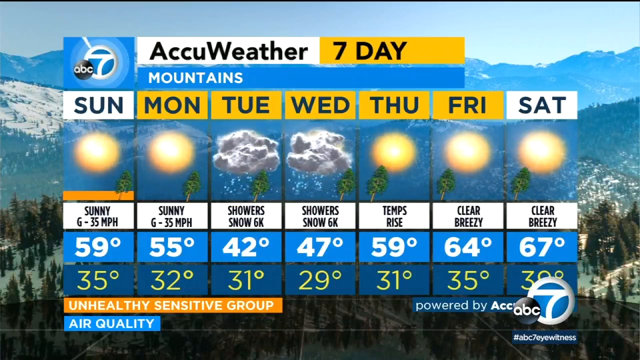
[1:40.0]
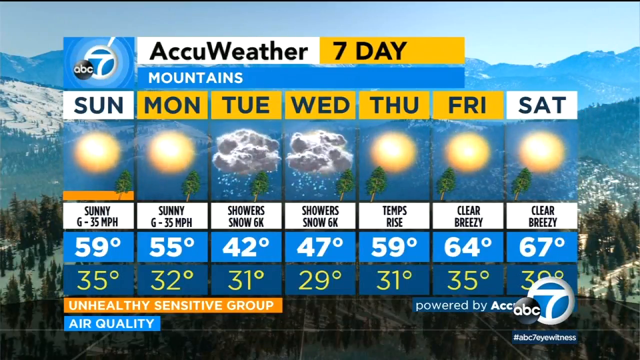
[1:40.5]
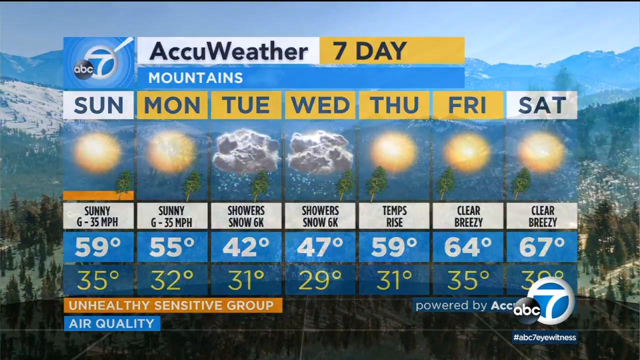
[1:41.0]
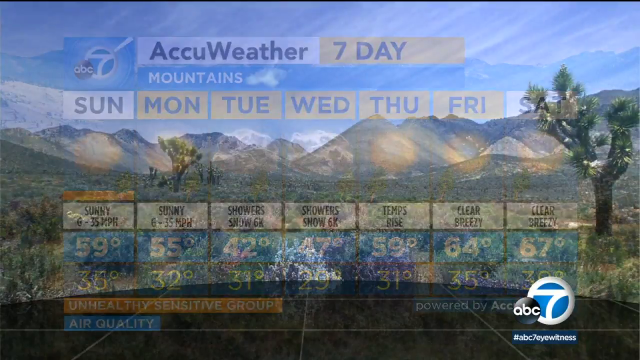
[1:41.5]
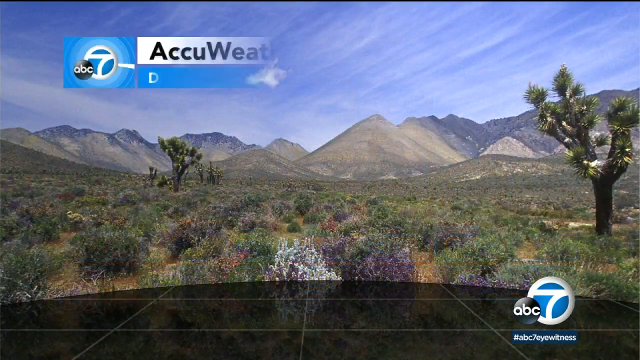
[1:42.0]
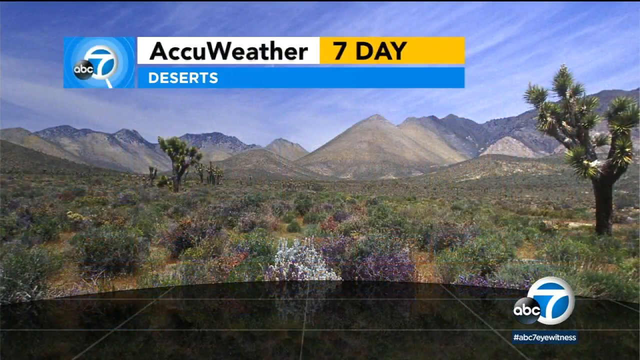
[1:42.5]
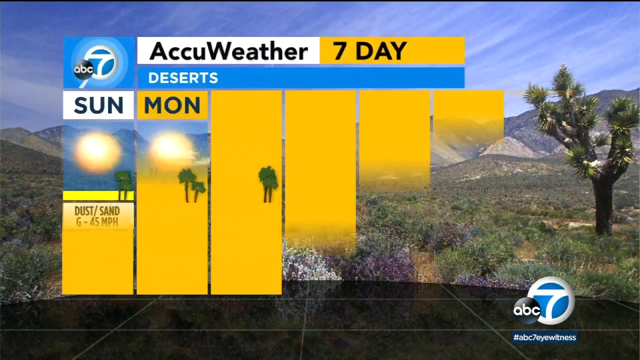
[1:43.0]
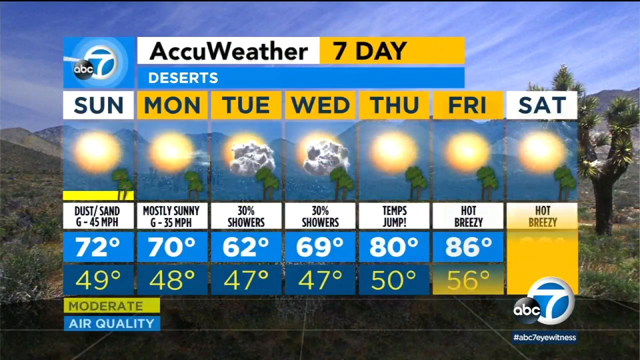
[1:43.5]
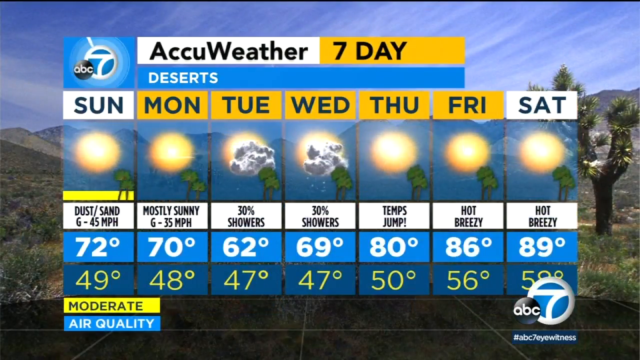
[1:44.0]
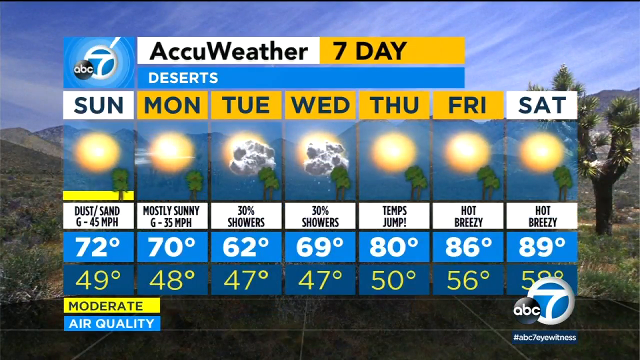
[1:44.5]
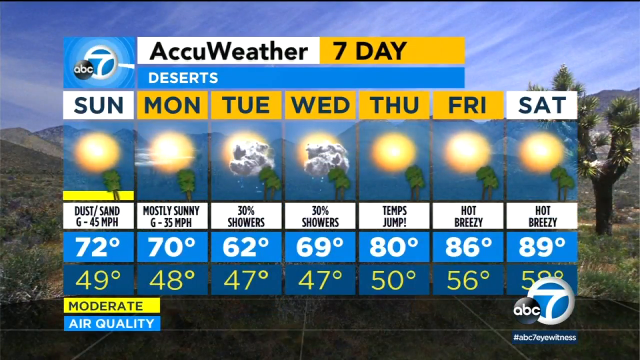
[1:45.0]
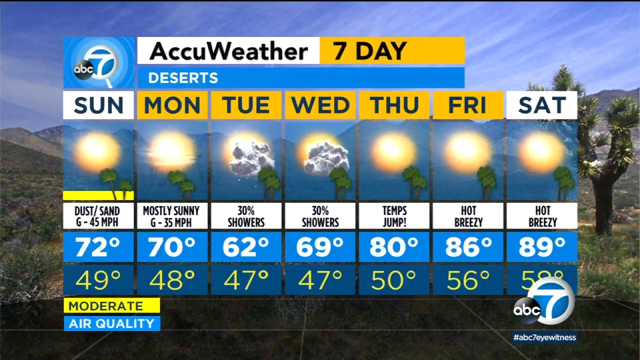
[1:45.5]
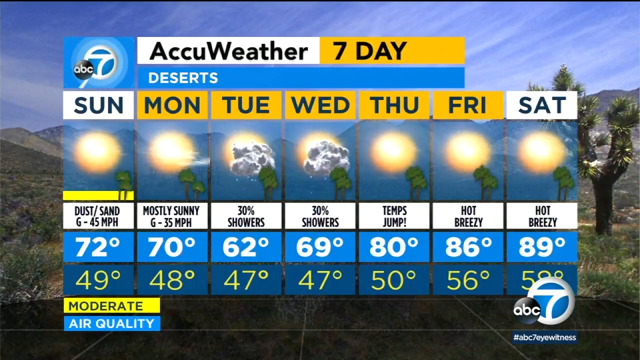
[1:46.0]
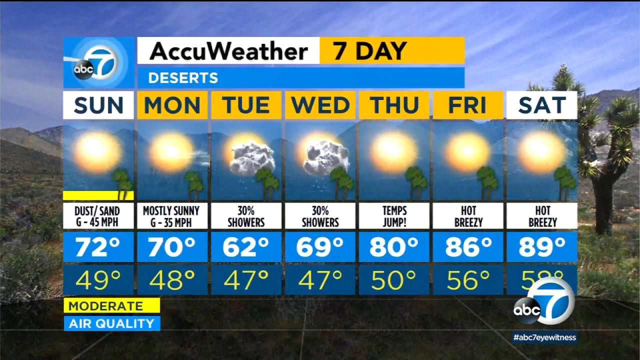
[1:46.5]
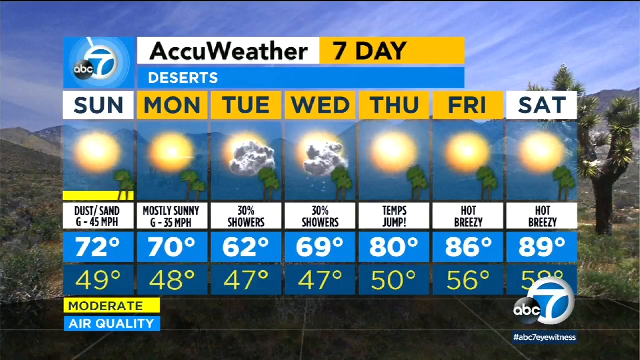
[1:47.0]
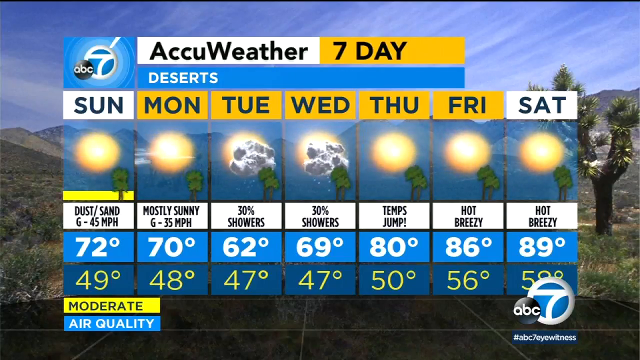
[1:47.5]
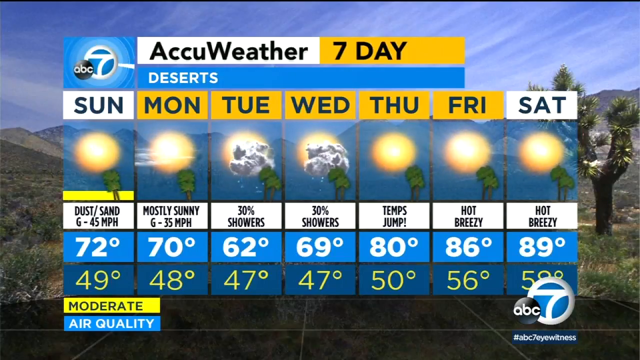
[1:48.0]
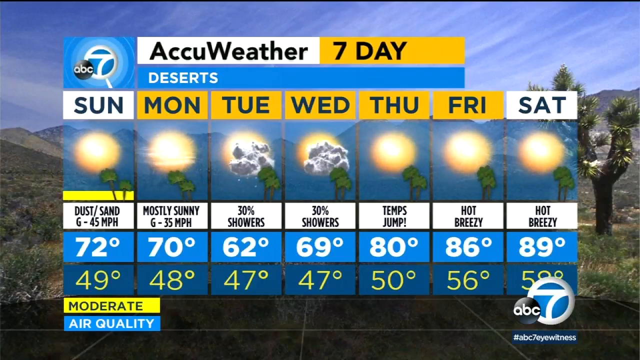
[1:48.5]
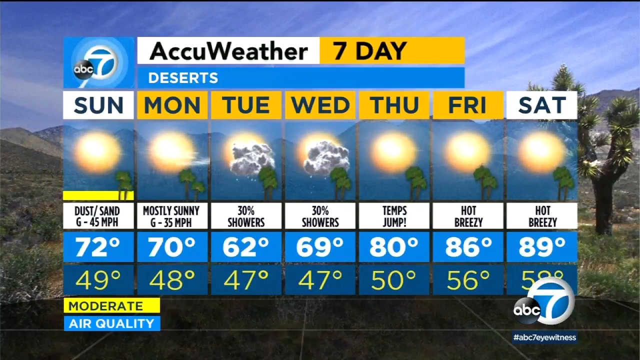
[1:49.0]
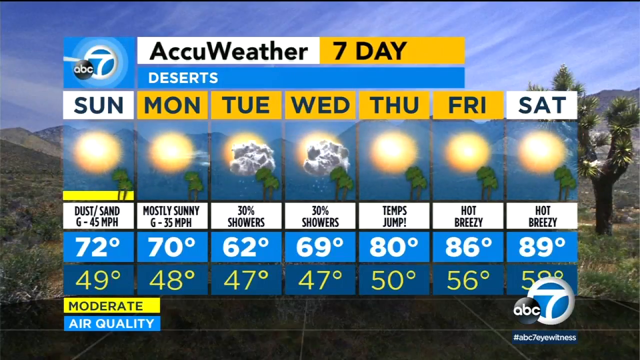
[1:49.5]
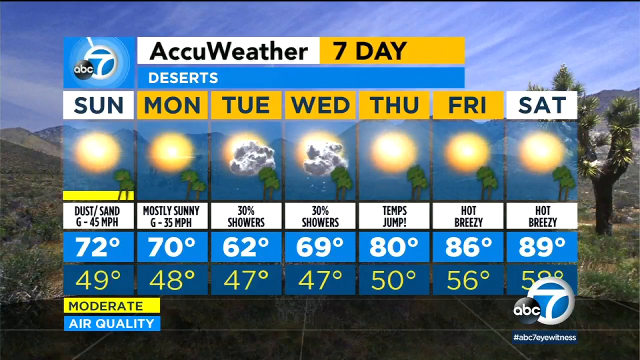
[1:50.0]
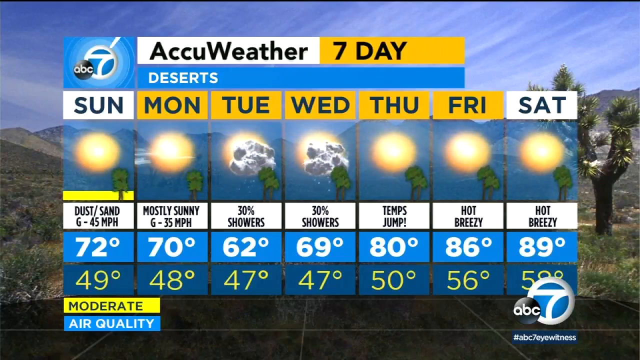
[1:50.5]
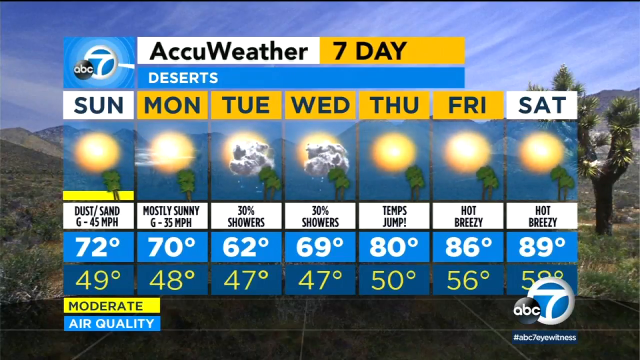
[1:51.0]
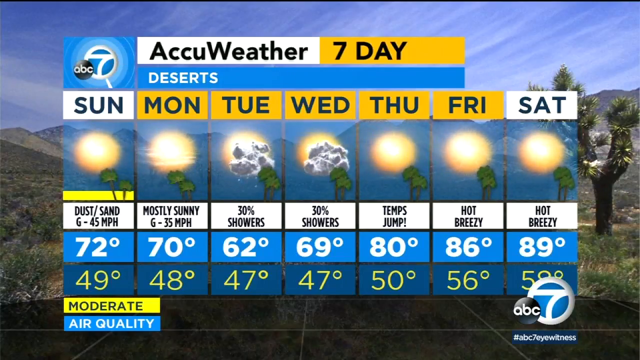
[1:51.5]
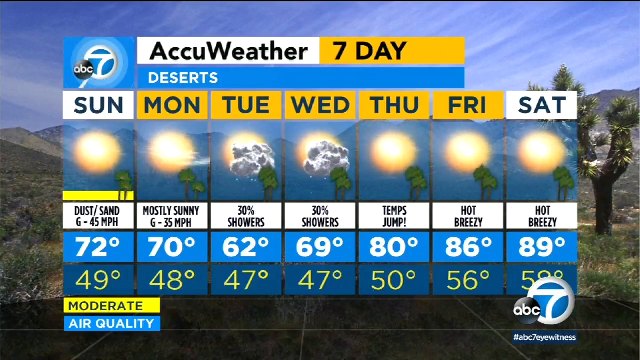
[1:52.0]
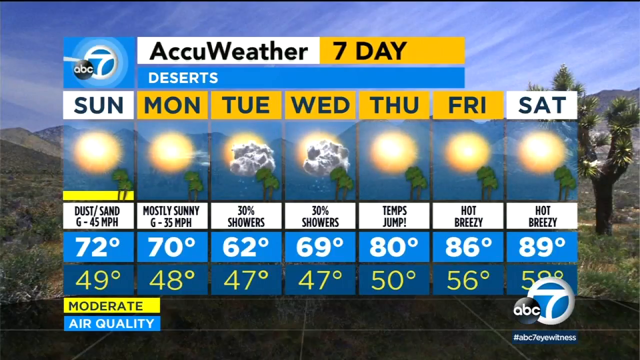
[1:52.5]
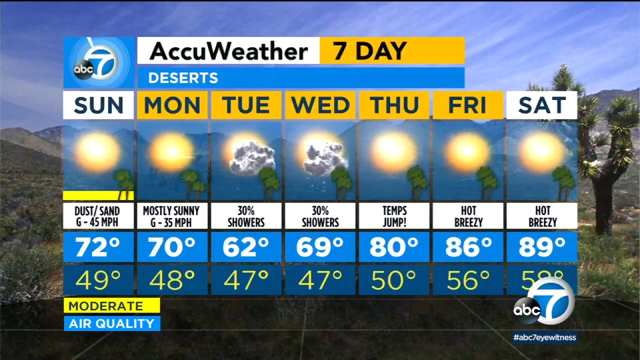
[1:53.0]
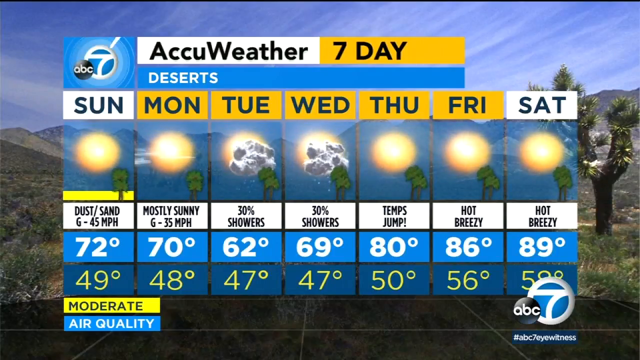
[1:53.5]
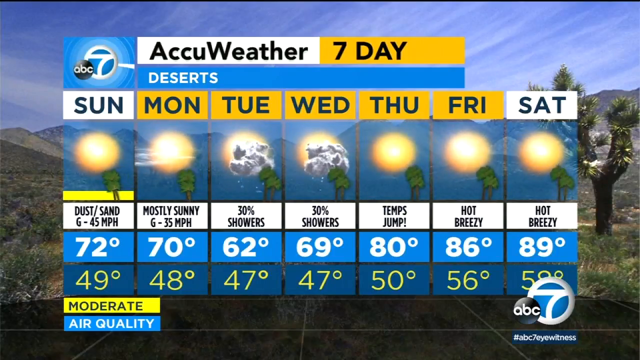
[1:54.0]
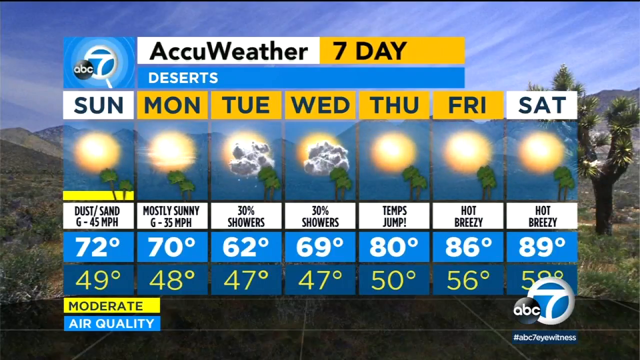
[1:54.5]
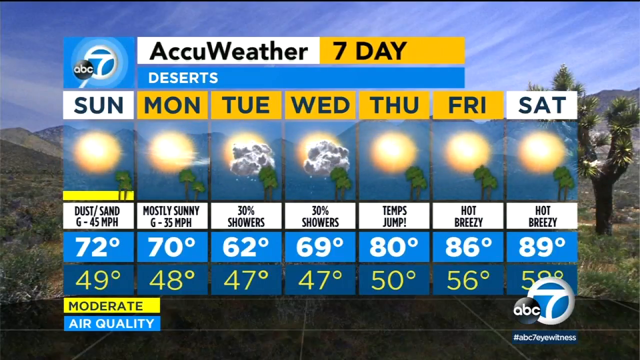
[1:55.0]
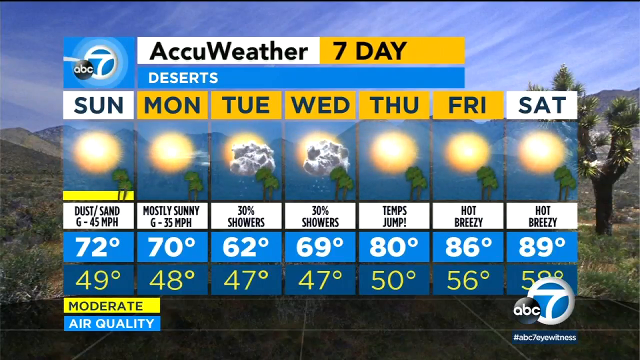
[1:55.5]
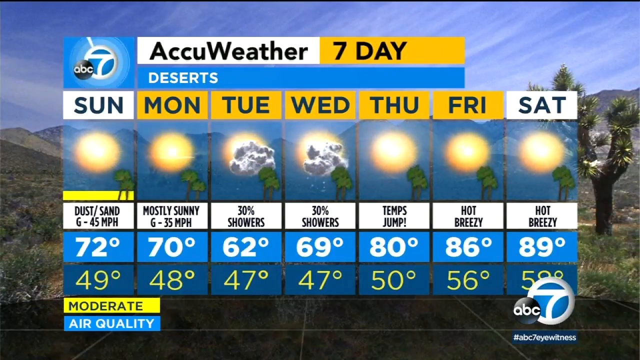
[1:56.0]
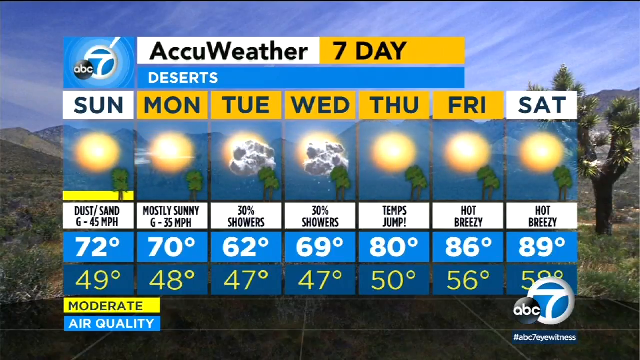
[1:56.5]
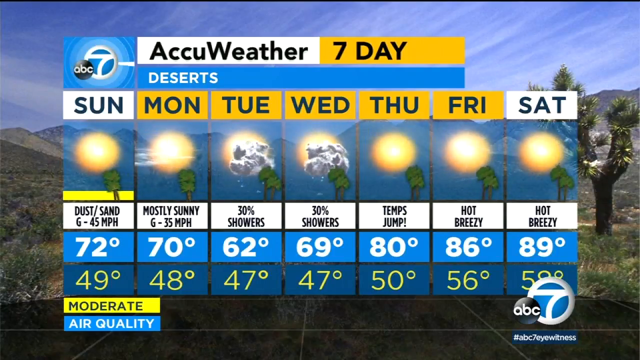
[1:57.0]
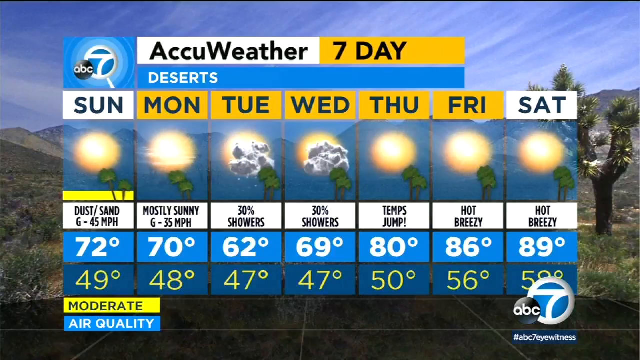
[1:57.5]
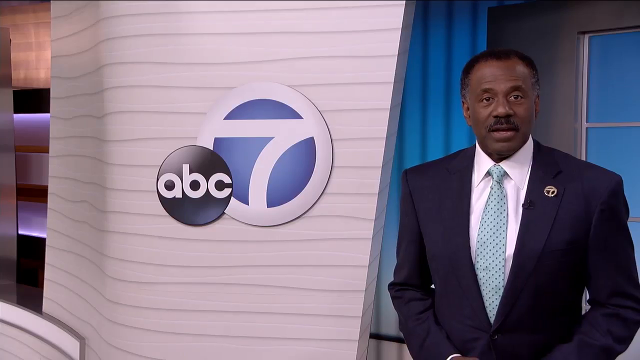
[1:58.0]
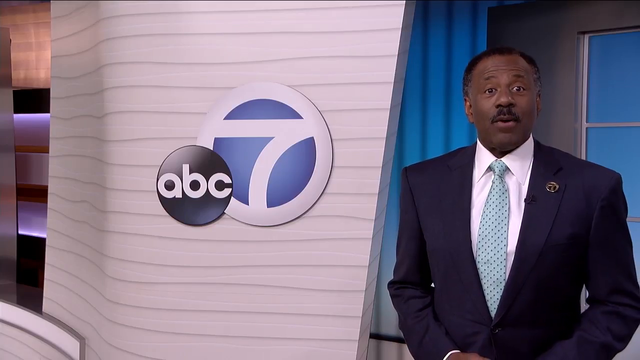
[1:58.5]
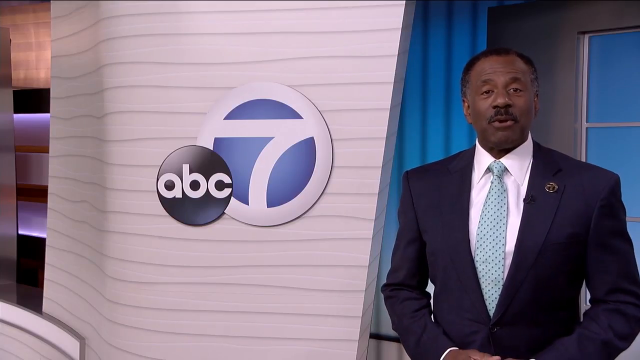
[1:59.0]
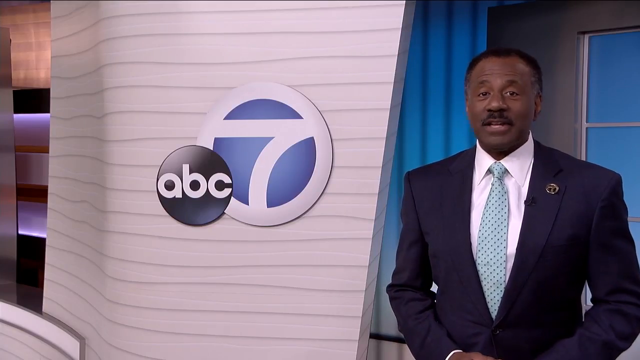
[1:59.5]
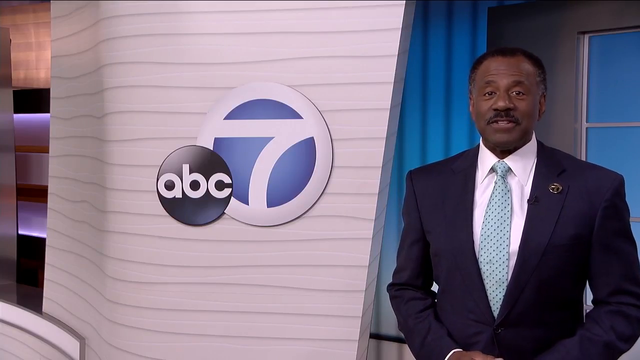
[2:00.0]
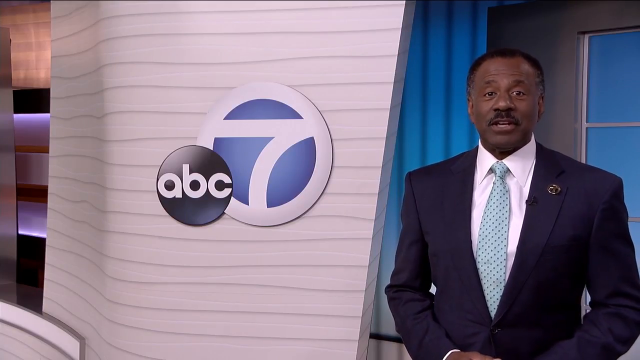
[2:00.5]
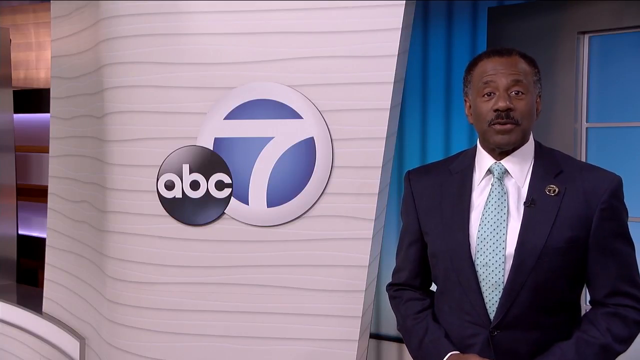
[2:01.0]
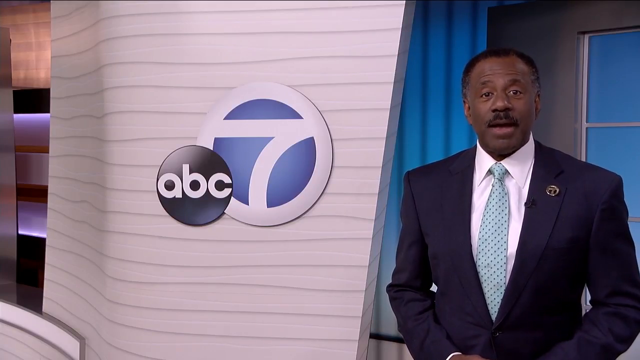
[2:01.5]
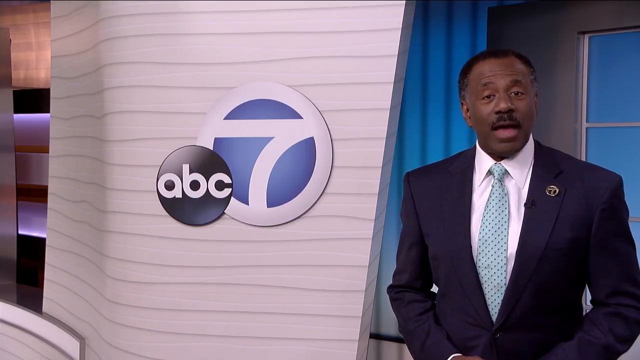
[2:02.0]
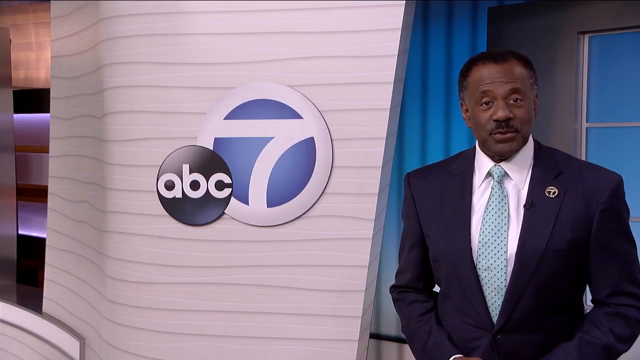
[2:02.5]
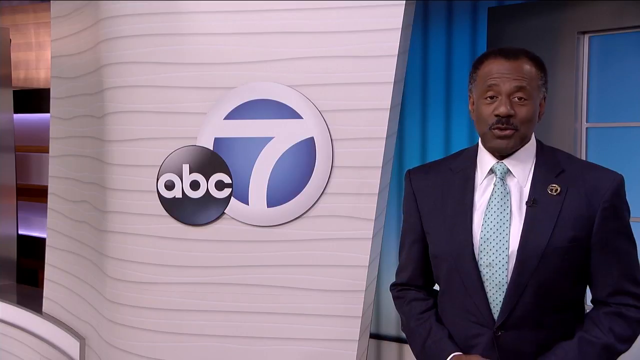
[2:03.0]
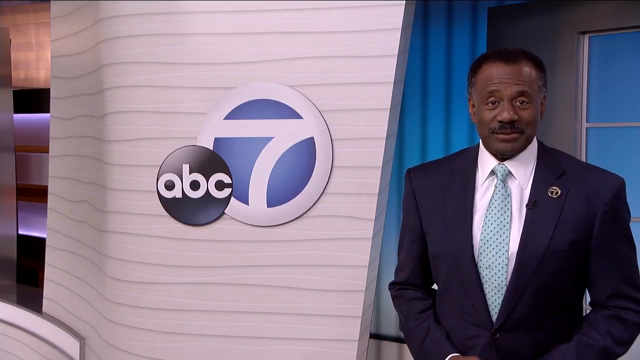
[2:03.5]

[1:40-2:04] The AccuWeather seven-day mountains forecast shows Sunday sunny, Monday sunny, Tuesday showers, Wednesday showers and snow 6k, Thursday a temperature rise, and Friday and Saturday clear and breezy. An AccuWeather seven-day forecast for deserts follows: Sunday dust and sand, Monday mostly sunny, Tuesday and Wednesday 30% showers, Thursday temperature jumps, and Friday and Saturday hot and breezy, with air quality shown as moderate and ABC 7 displayed. Afterward, an African man in a black suit, white shirt and blue polka-dot black tie presents the weather. He has a moustache, stands facing the camera with his hands clenched together, holds a pen, and stands behind a design with ABC and 7 written inside a blue circle.